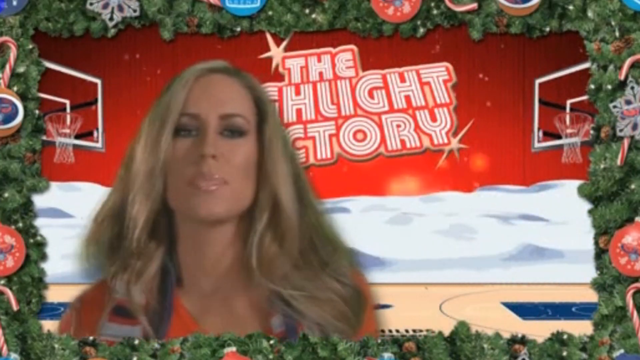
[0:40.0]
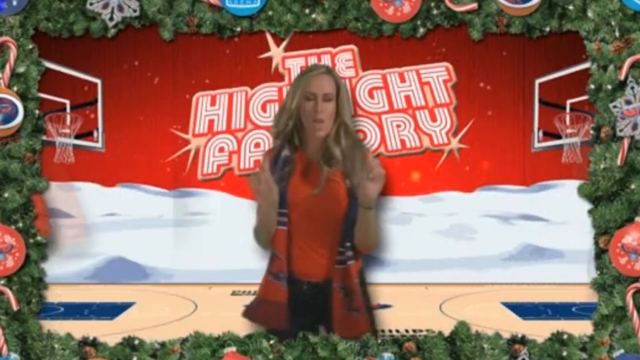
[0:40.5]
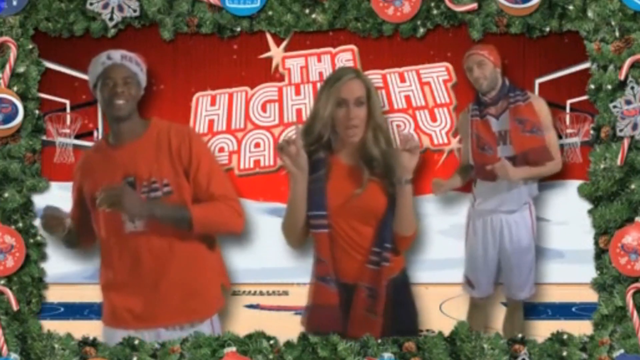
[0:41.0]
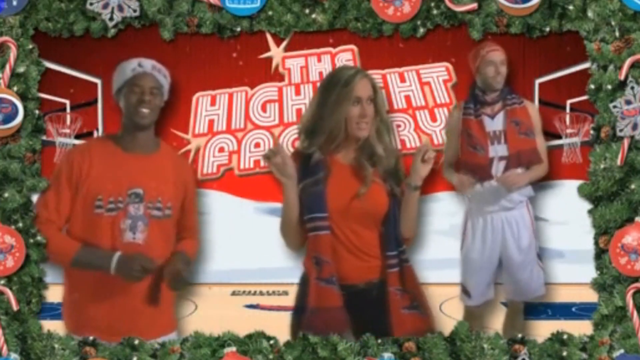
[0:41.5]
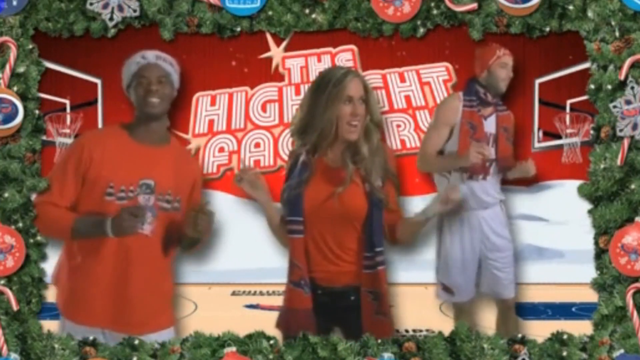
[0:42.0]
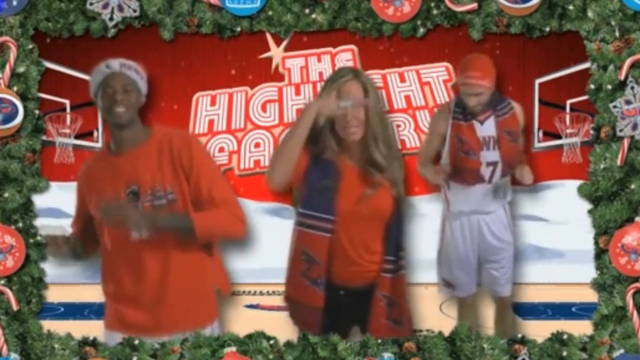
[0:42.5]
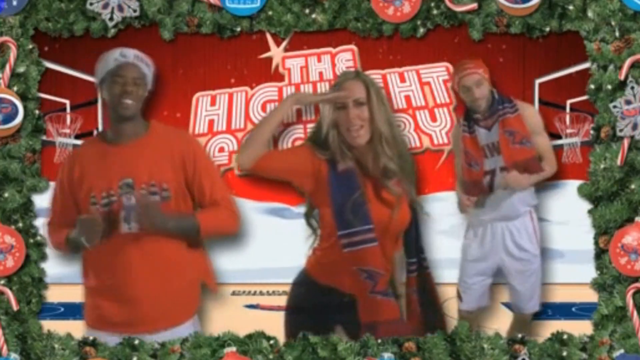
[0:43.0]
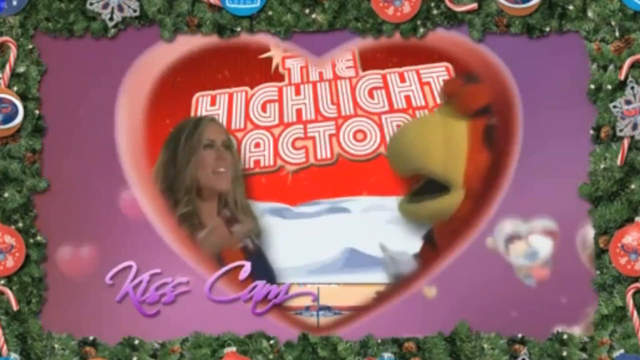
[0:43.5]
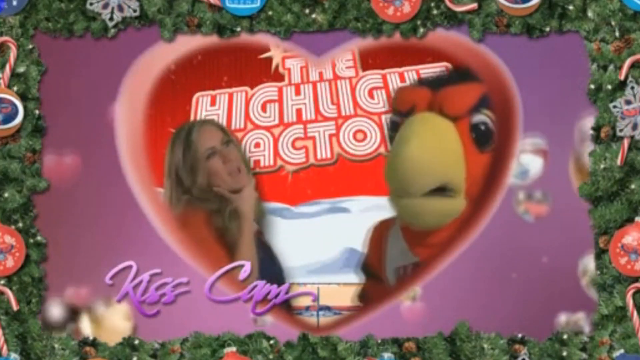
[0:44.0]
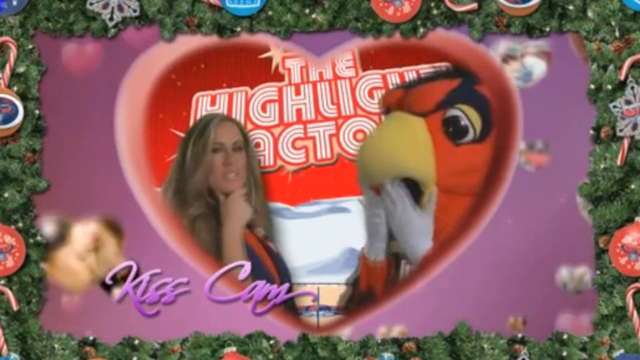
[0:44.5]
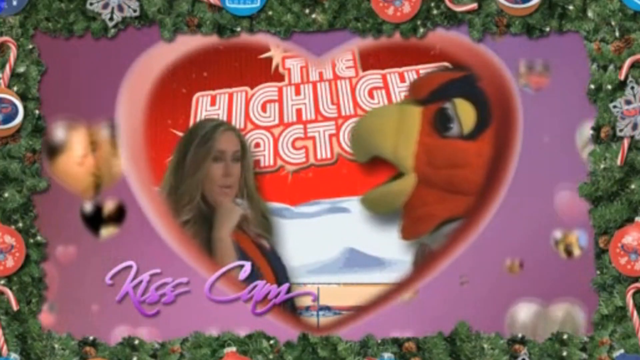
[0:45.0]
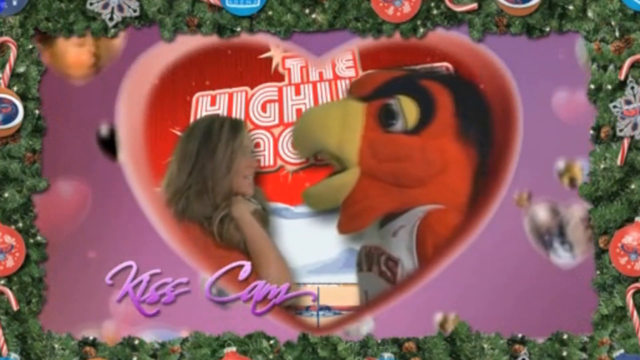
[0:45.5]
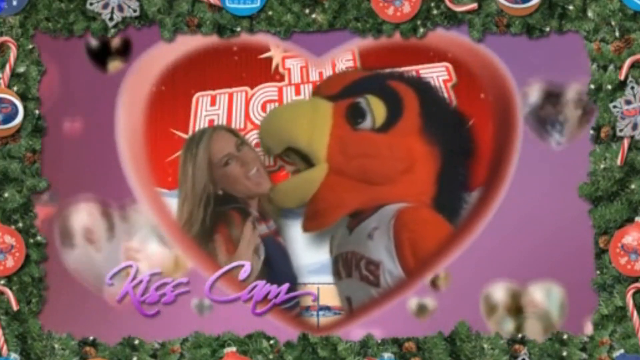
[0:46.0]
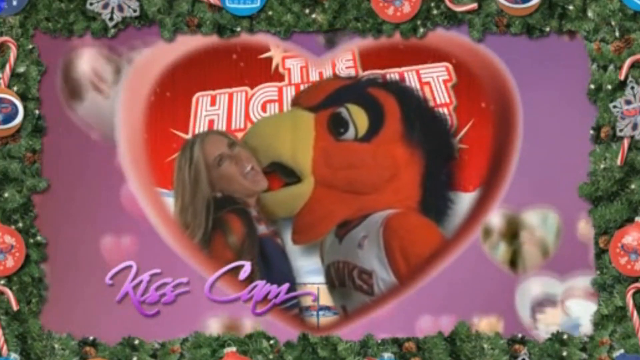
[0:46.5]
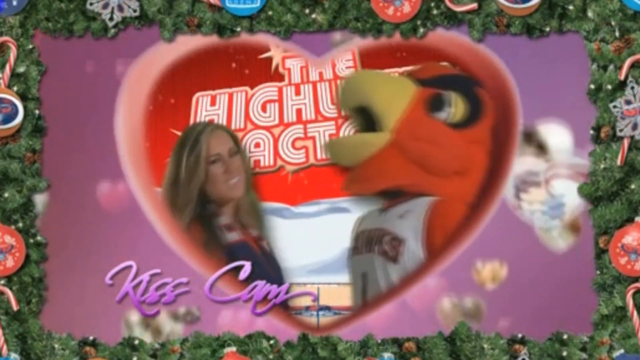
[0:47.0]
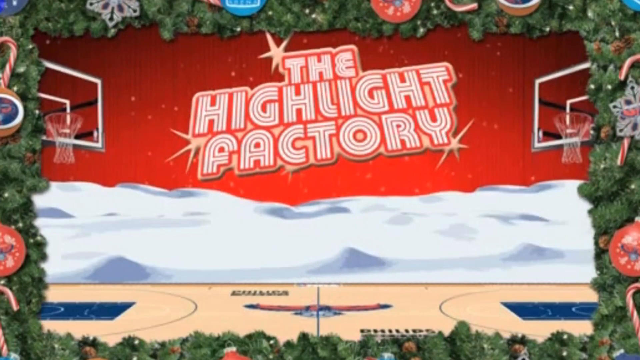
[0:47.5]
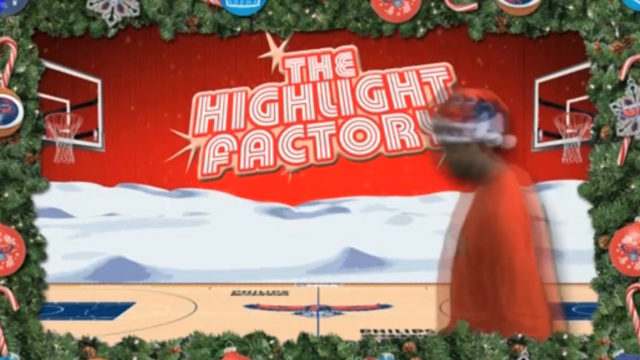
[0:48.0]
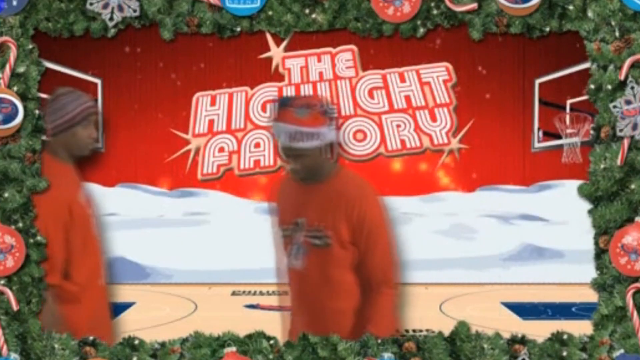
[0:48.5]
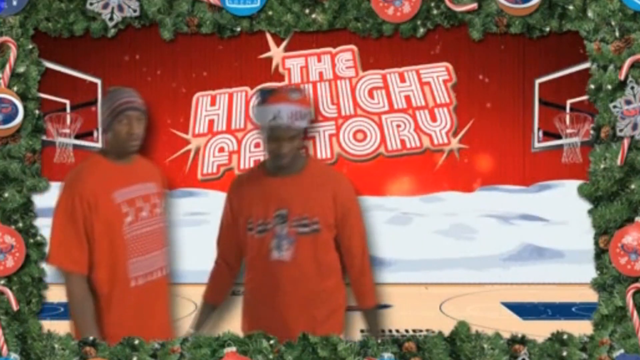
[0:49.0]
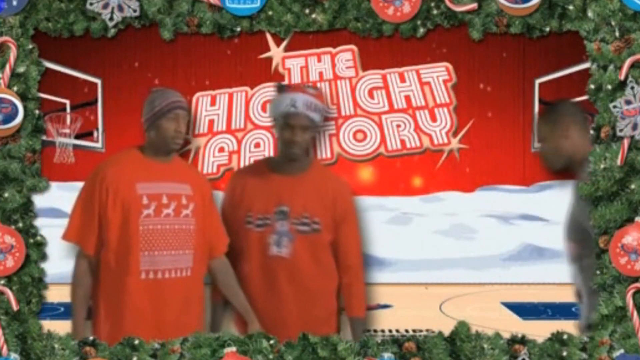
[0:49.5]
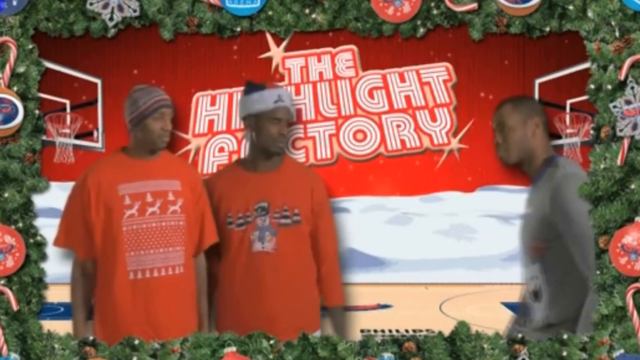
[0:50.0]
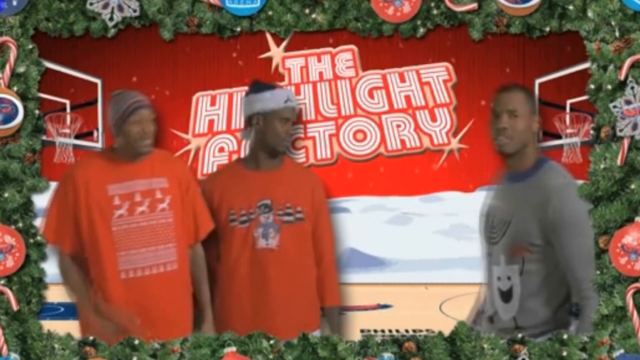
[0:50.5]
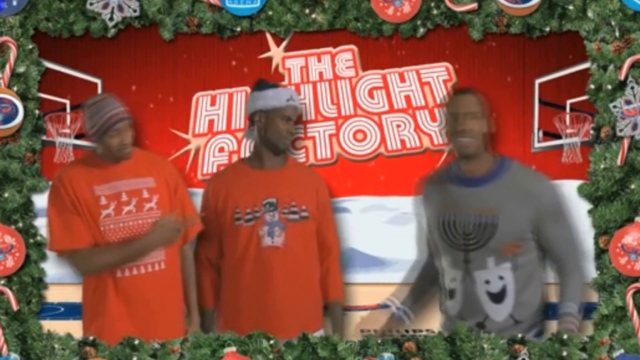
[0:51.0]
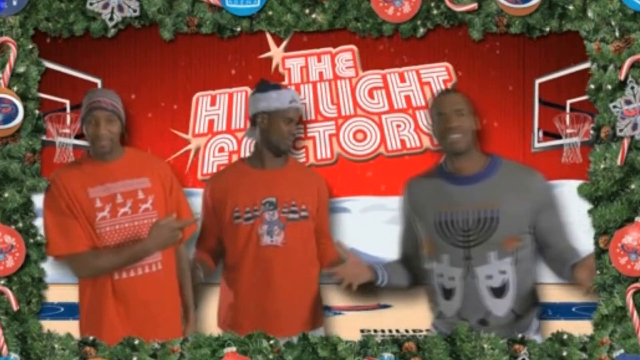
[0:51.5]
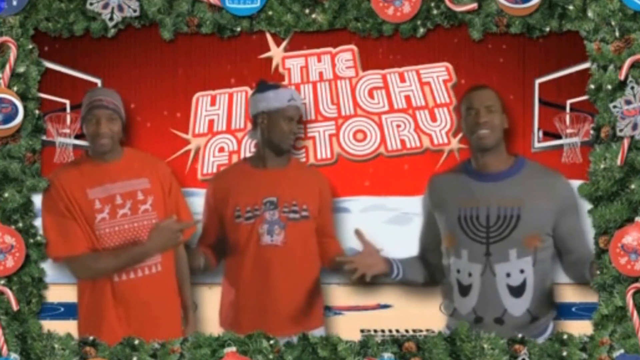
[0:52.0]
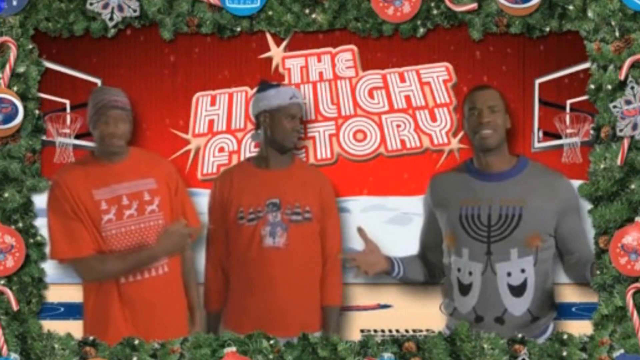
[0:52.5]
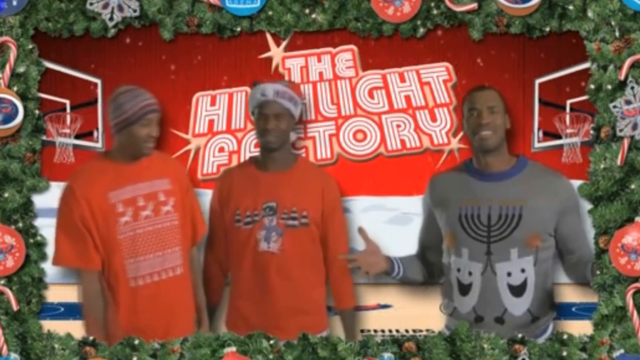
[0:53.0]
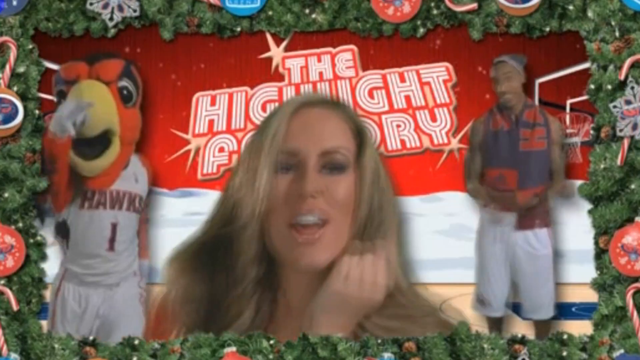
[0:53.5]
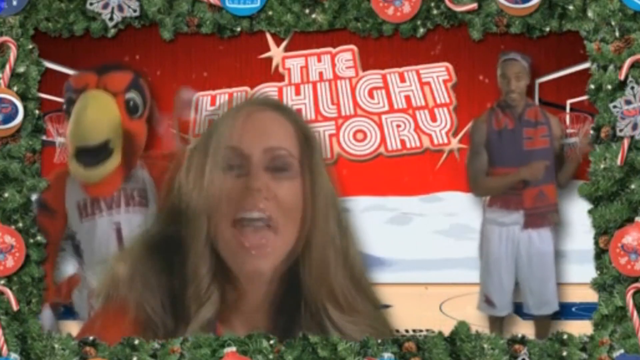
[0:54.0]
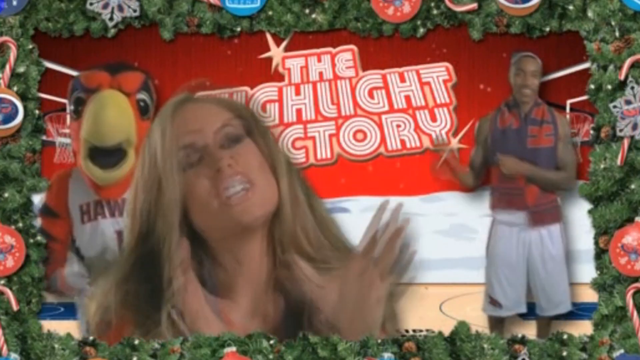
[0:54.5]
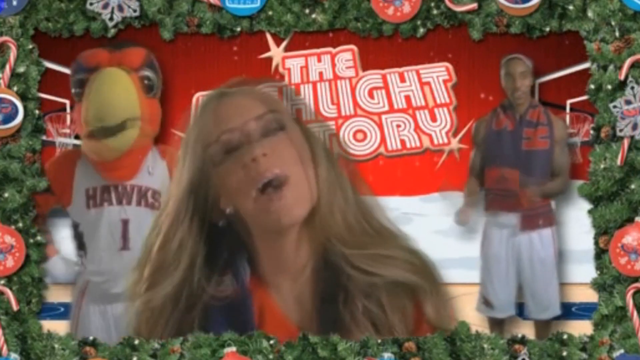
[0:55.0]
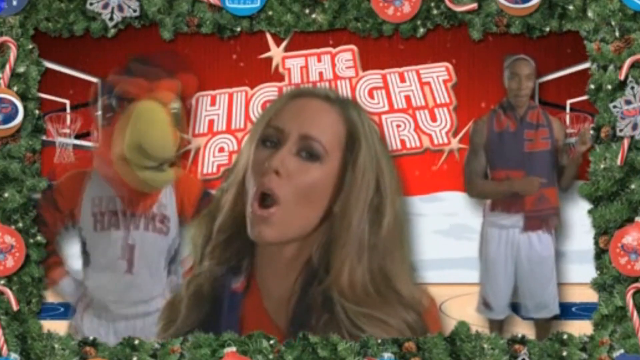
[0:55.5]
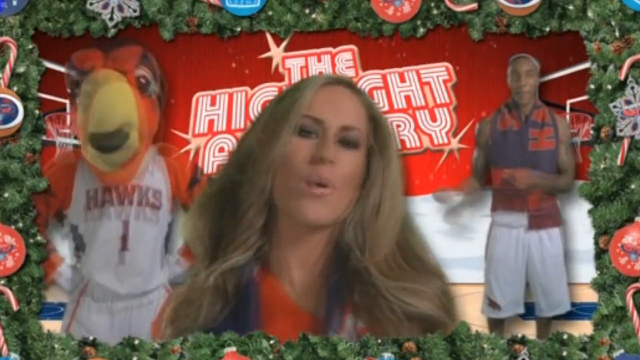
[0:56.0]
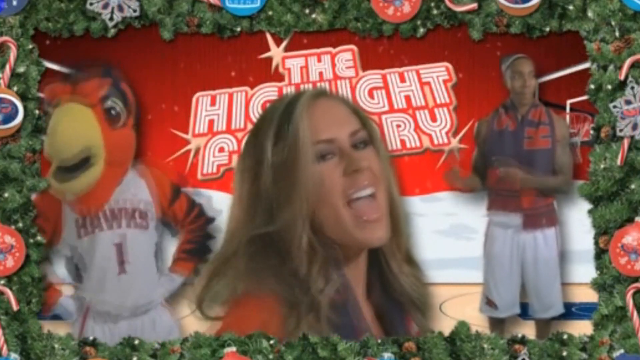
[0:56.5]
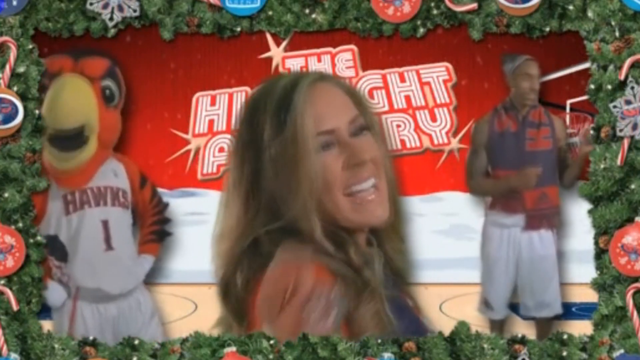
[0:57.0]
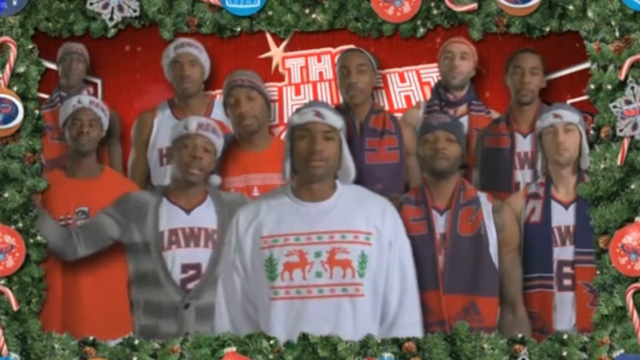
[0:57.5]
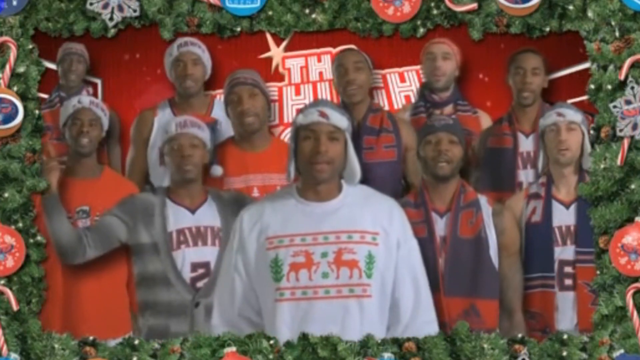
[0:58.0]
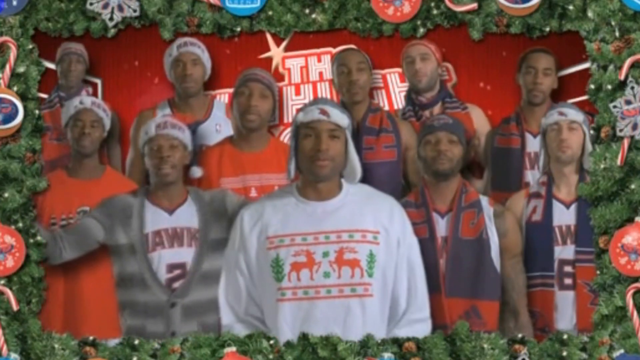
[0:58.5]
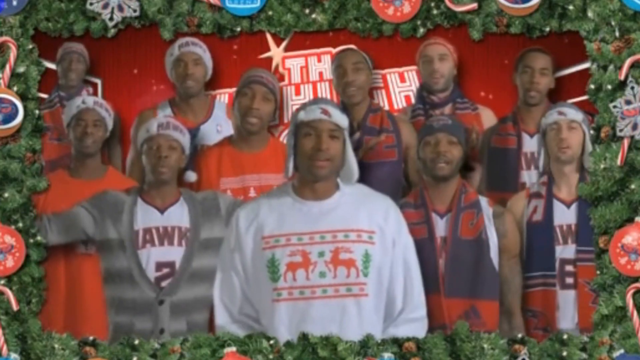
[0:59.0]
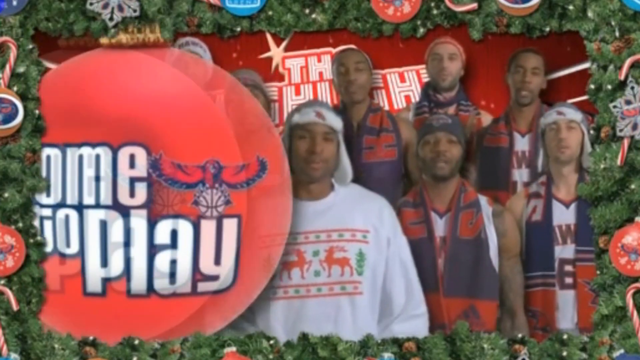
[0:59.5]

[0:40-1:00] A woman in a Christmas scene appears to be singing, maybe a Christmas carol. She stands in the center of the screen, moving her body back and forth and putting her hand up to her forehead as if giving a salute. In other portions, Atlanta Hawks players walk onto the screen, turn to look at the camera, and throw their hands up as if confused. One portion shows a large part of the team, a whole group of players who look like they are dancing and singing along. A large Christmas ornament reading "come to play" then crosses the screen from left to right, wiping away all the people in the background. Afterward, other players sing along or just stand looking at the camera, seemingly confused, putting their hands up in front of them and beside them with their palms up.